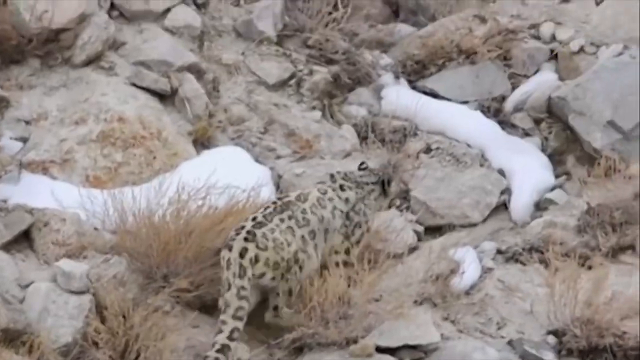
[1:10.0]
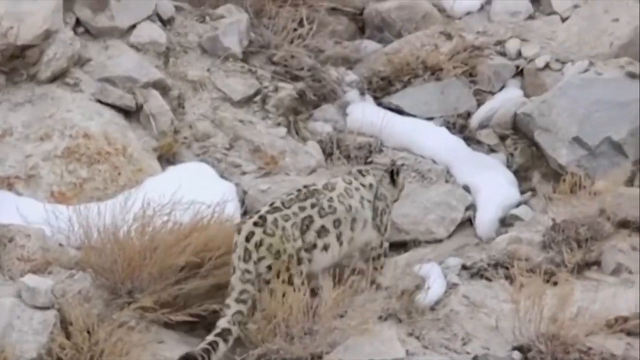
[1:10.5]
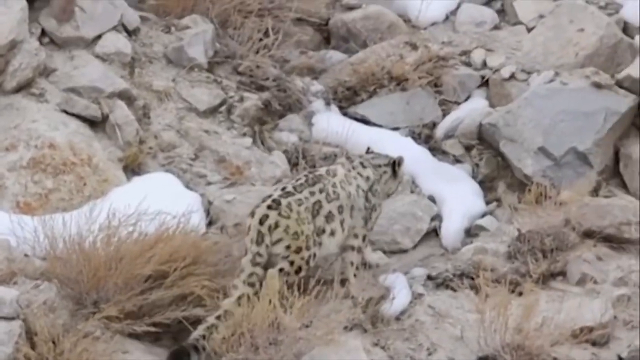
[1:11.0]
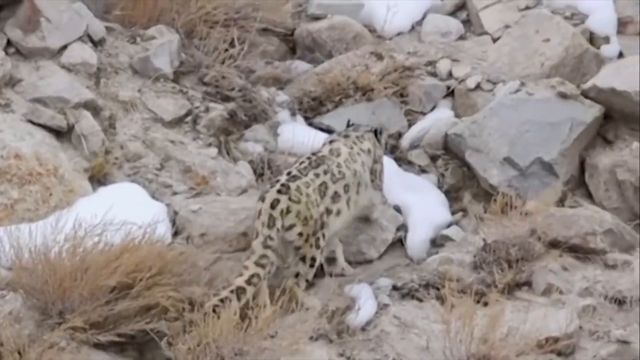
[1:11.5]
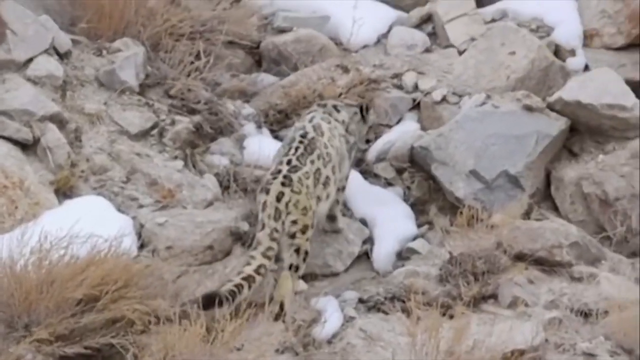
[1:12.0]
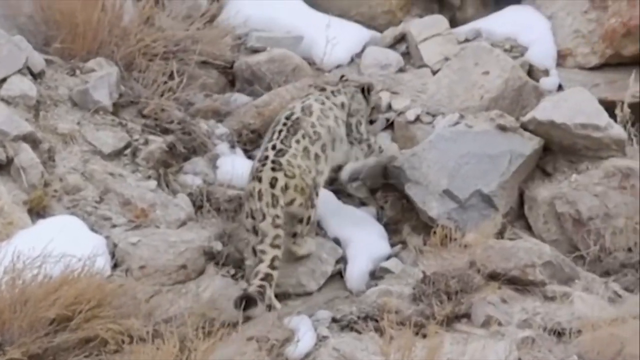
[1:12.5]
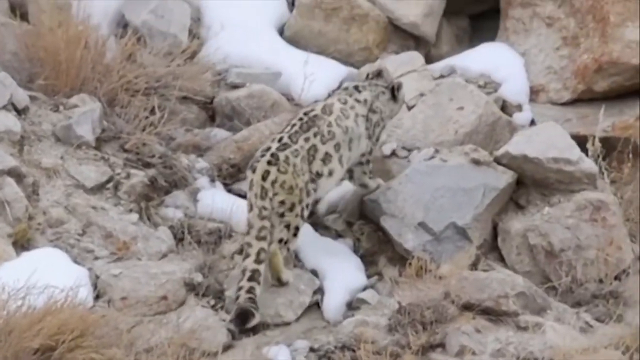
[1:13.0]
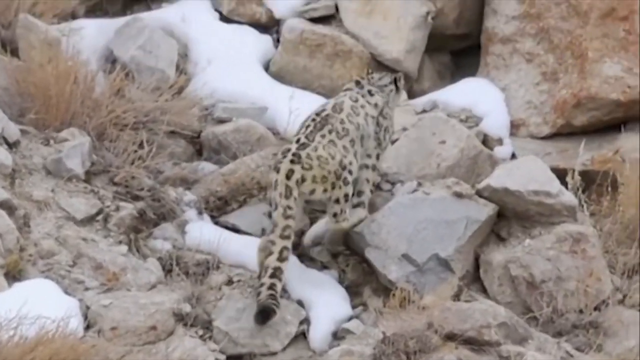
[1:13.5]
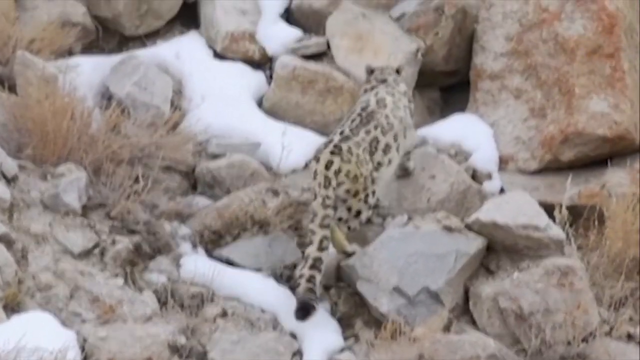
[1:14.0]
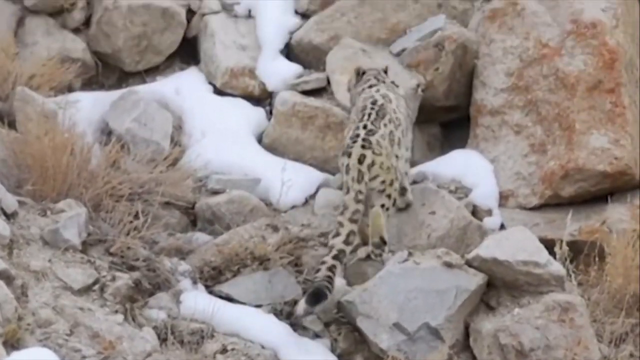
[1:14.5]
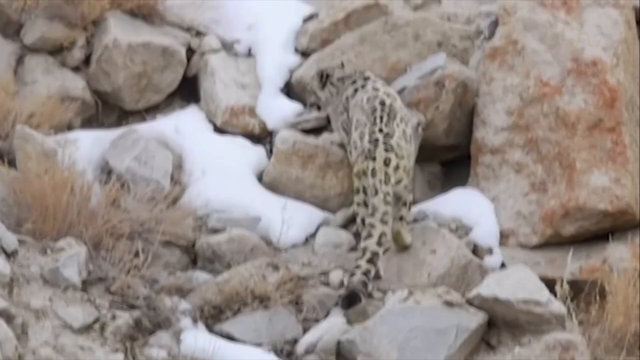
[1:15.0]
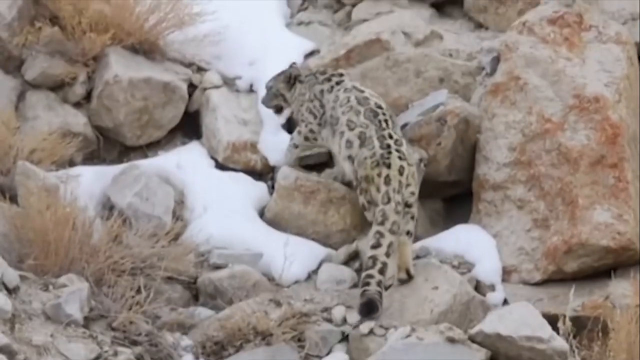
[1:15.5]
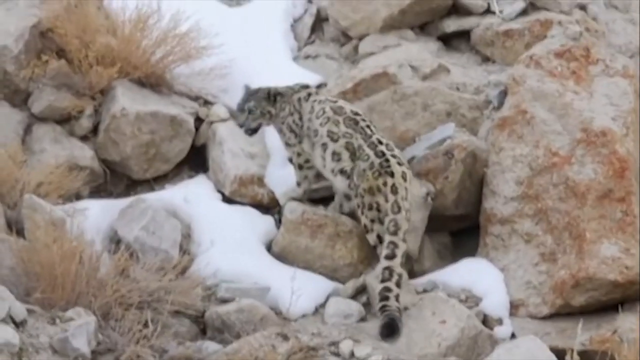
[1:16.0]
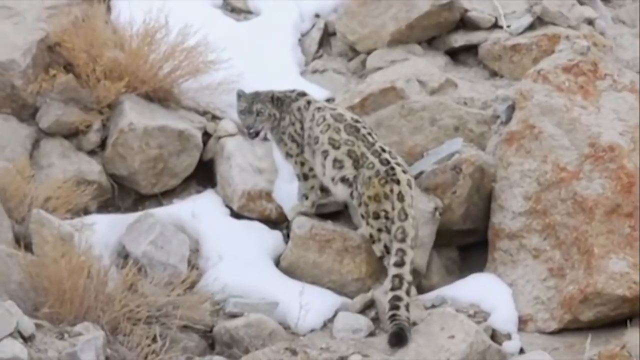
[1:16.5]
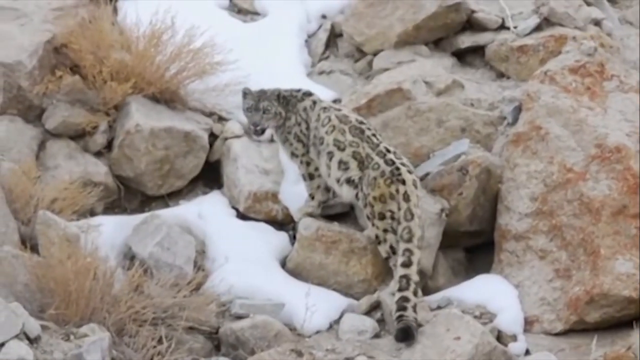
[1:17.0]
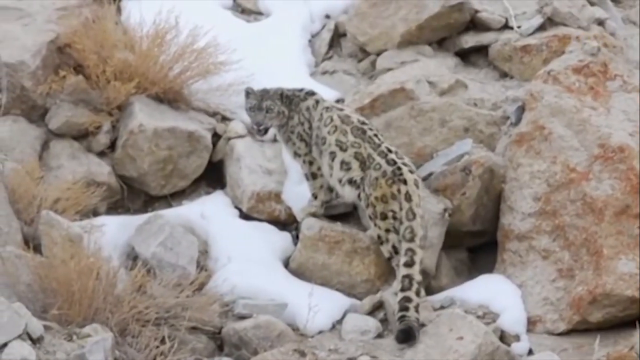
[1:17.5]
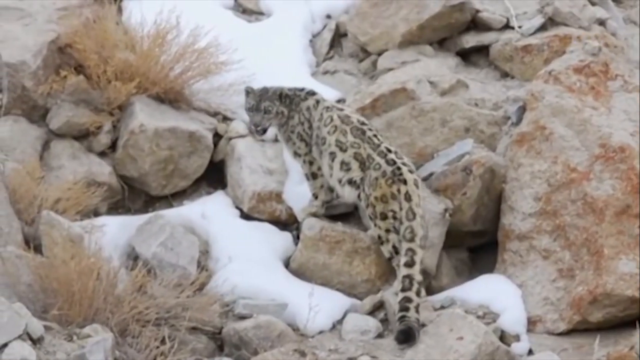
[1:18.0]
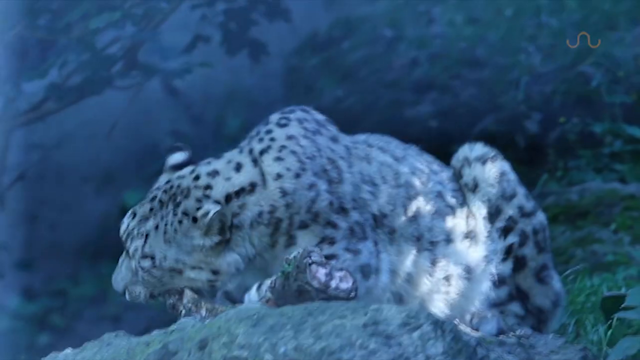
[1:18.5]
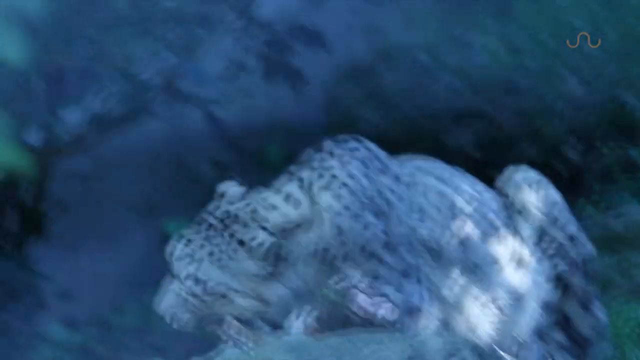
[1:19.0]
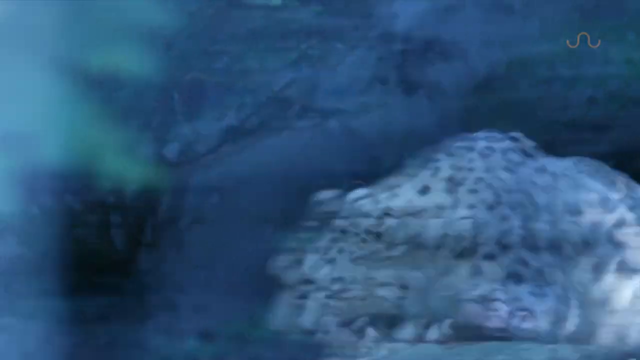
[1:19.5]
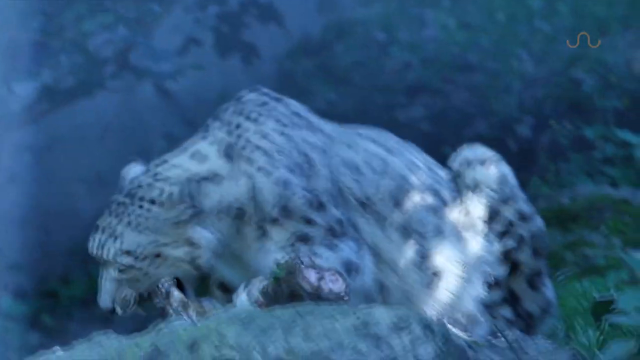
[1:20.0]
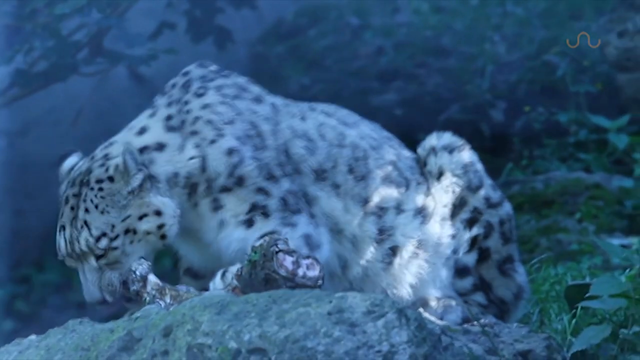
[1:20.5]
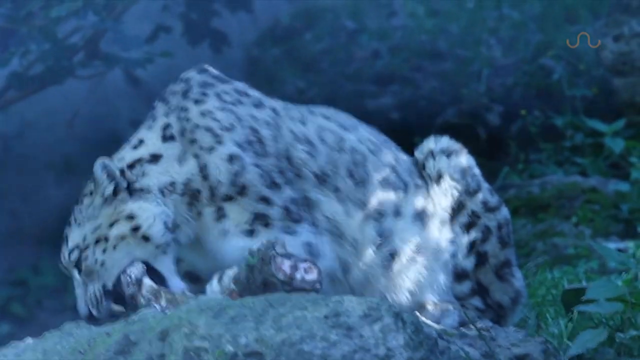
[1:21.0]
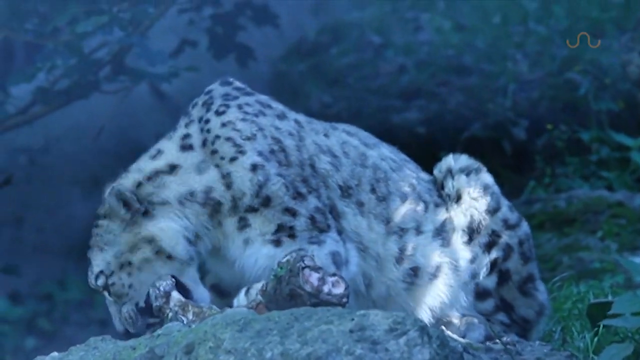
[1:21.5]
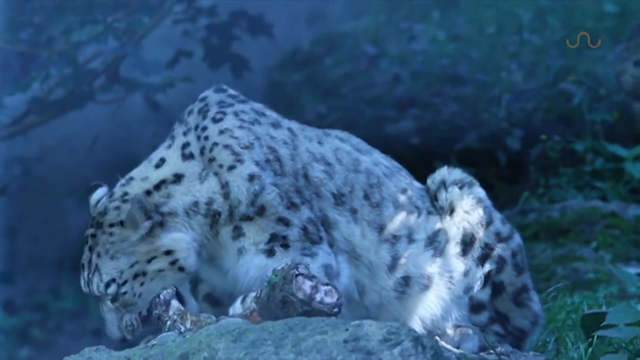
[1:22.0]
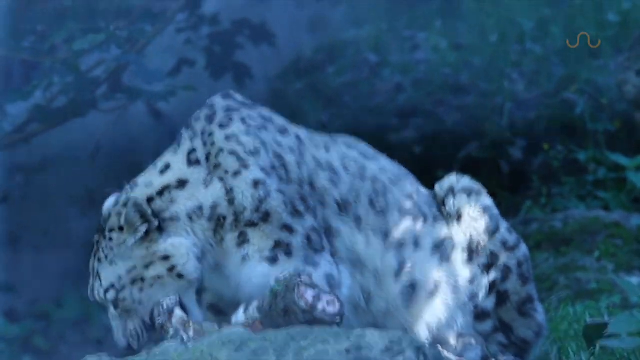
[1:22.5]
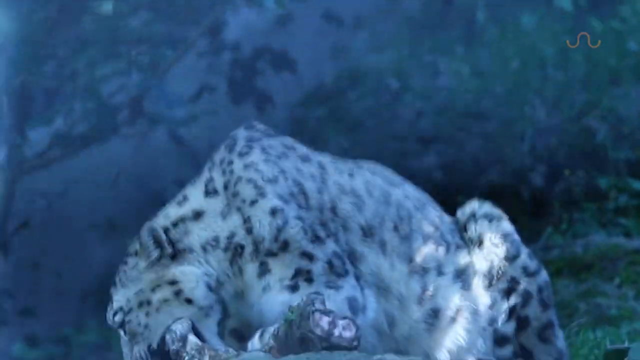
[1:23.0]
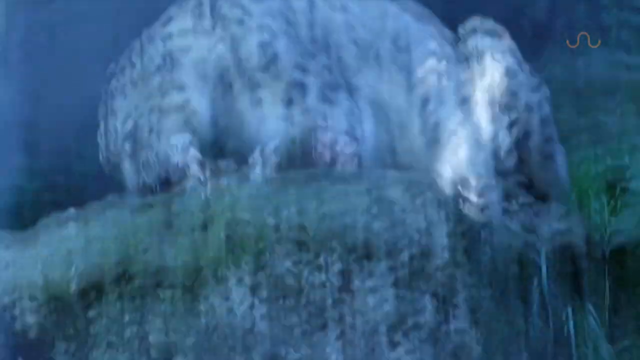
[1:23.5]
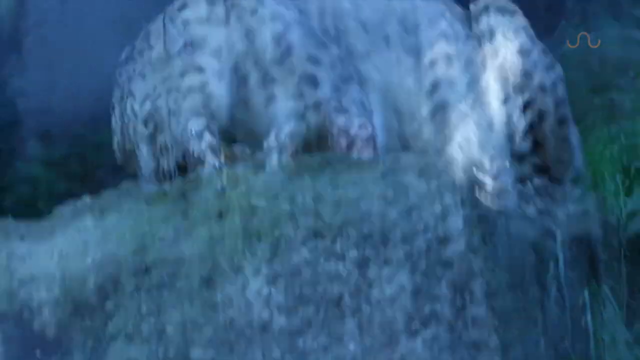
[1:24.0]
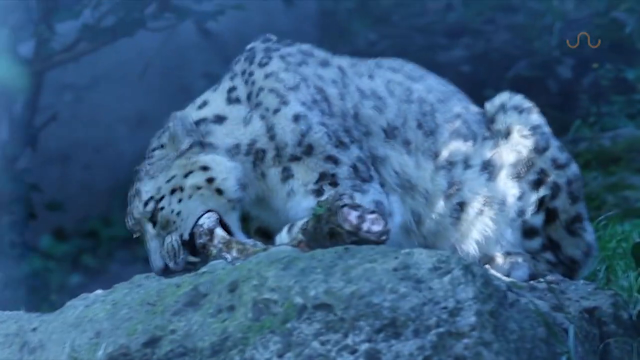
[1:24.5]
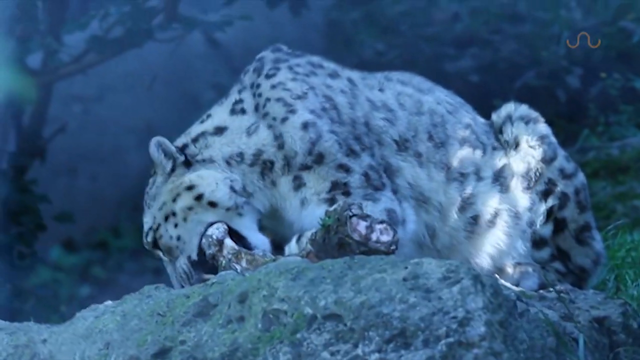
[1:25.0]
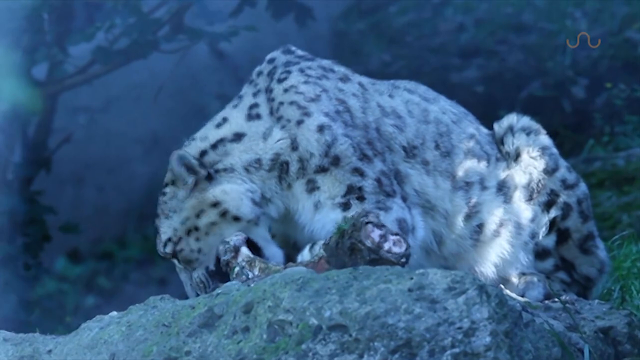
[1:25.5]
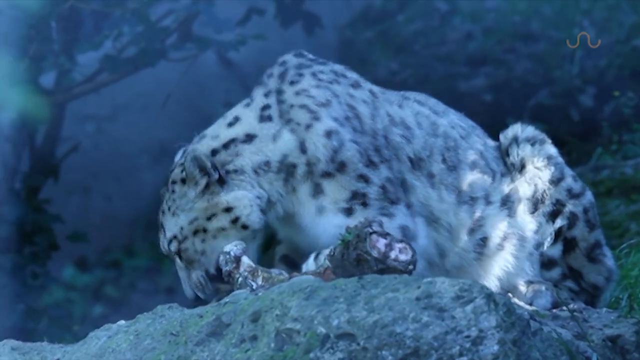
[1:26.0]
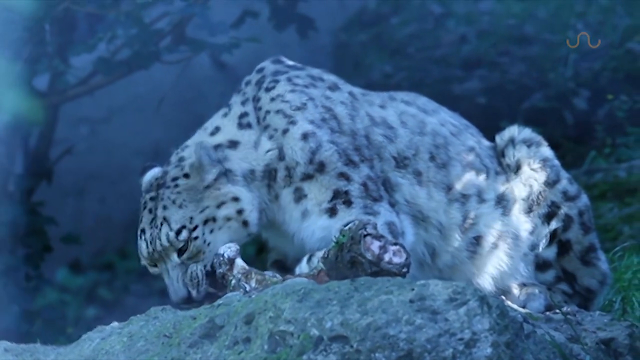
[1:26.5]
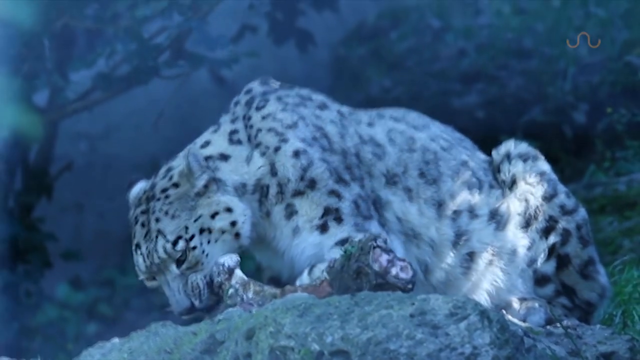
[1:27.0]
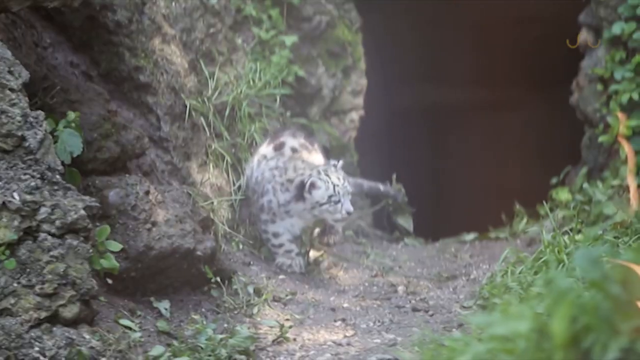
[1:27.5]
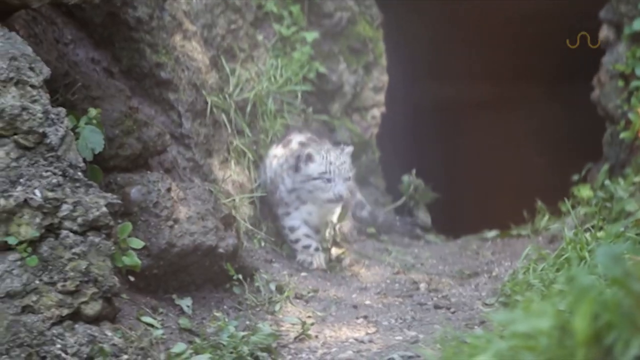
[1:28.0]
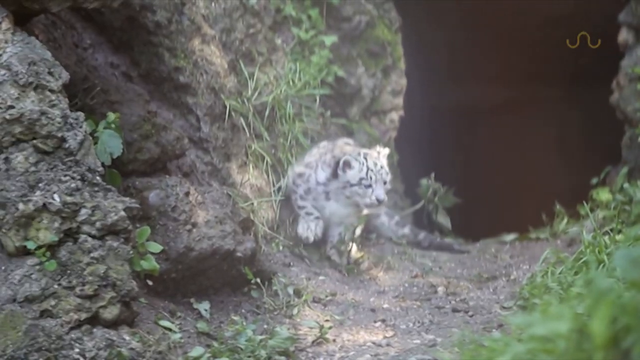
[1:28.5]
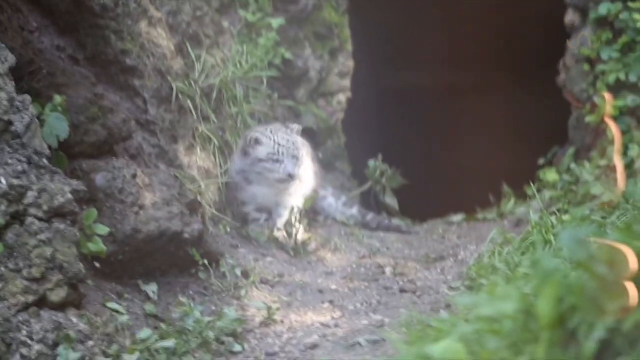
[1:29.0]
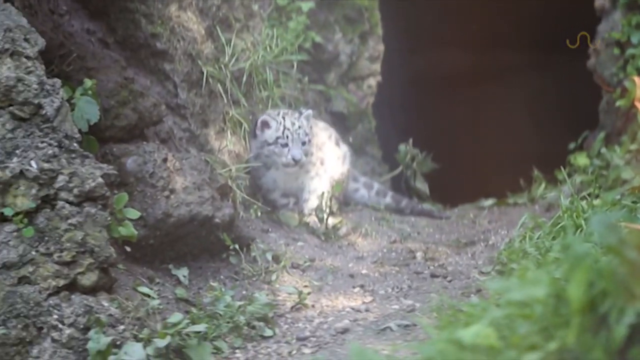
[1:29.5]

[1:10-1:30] The snow leopard climbs up the mountain, then the video cuts to a snow leopard eating its food and chewing on a bone, and then cuts to a baby snow leopard cub.